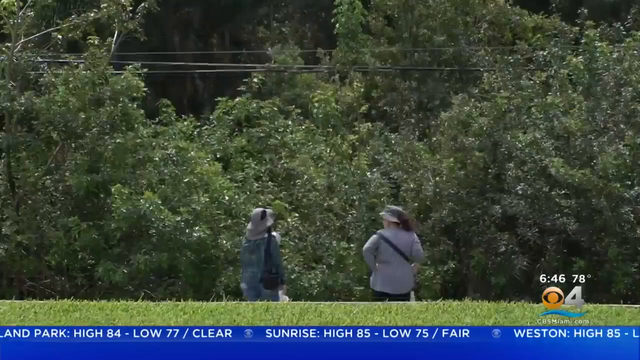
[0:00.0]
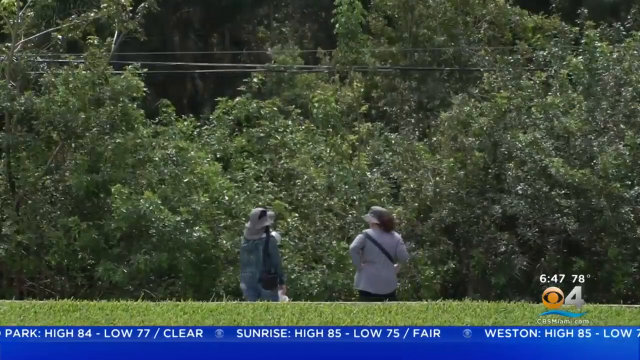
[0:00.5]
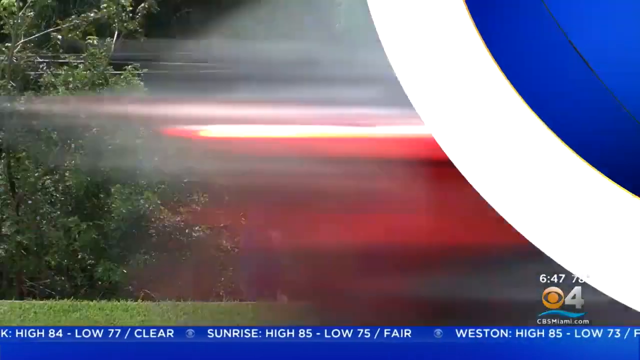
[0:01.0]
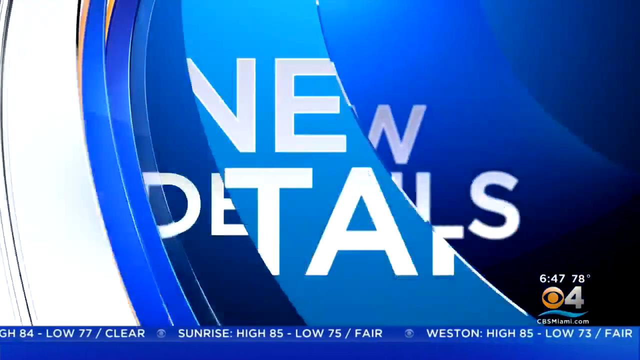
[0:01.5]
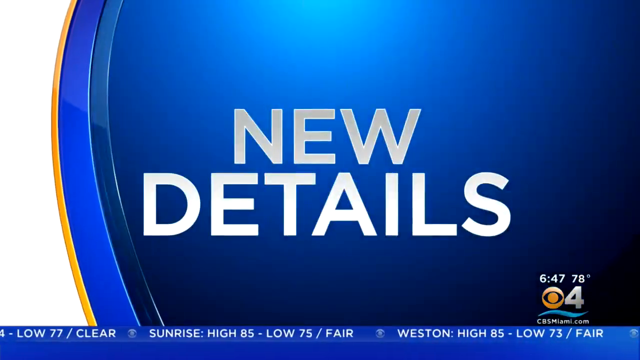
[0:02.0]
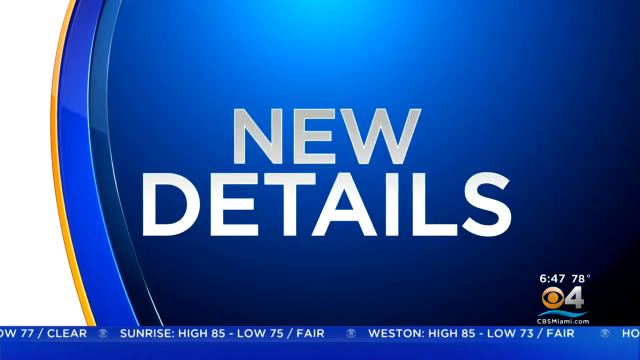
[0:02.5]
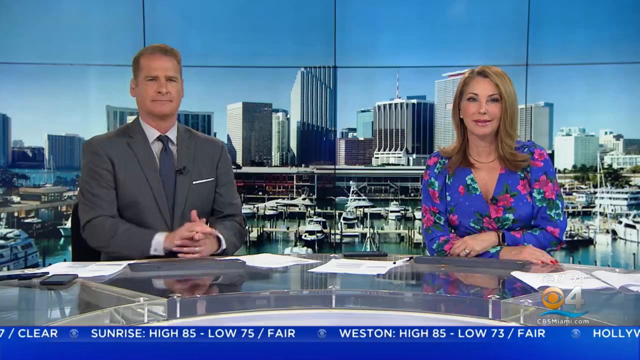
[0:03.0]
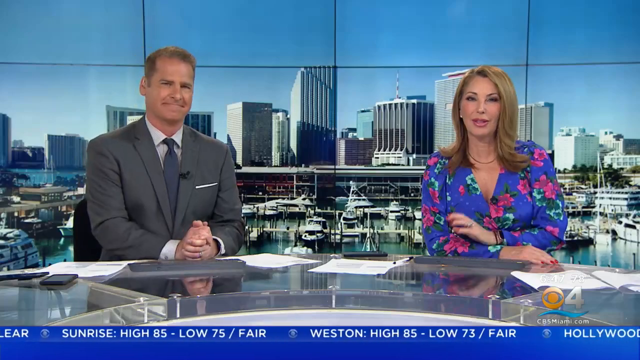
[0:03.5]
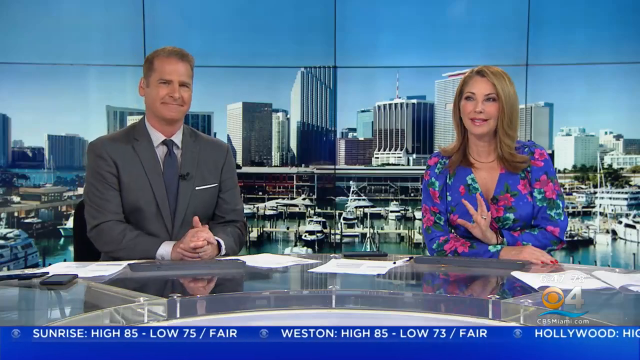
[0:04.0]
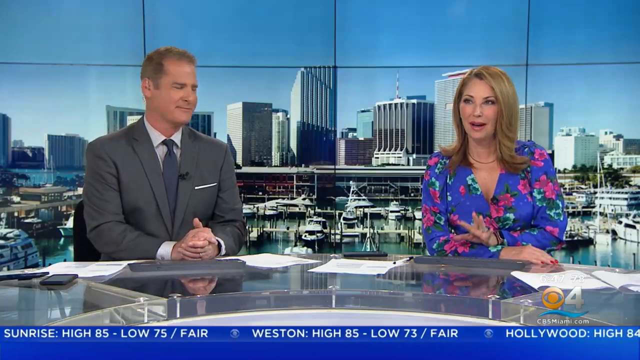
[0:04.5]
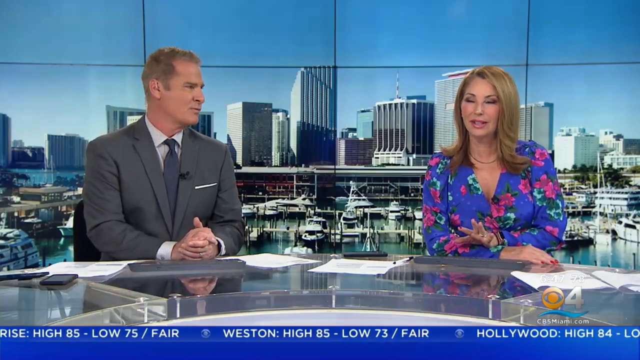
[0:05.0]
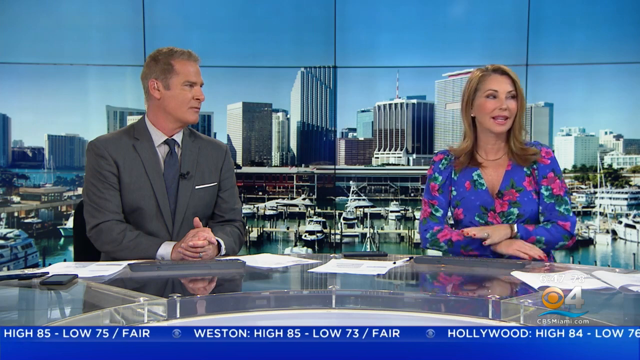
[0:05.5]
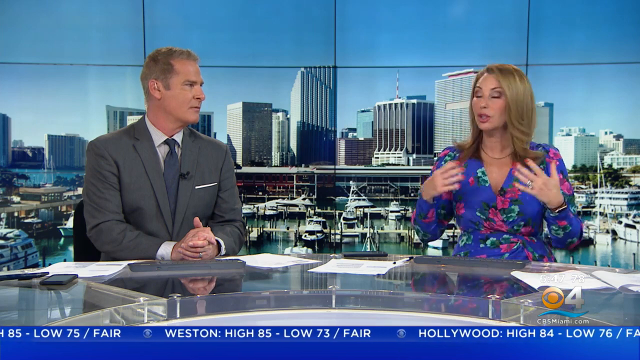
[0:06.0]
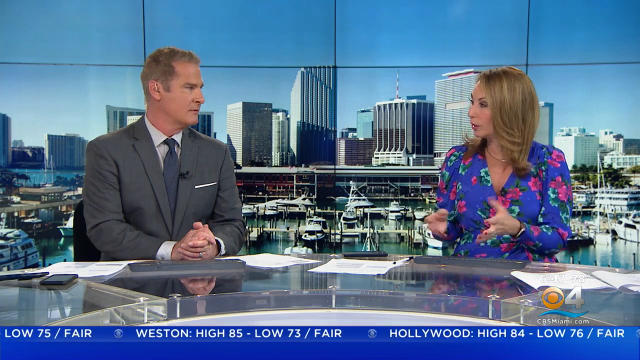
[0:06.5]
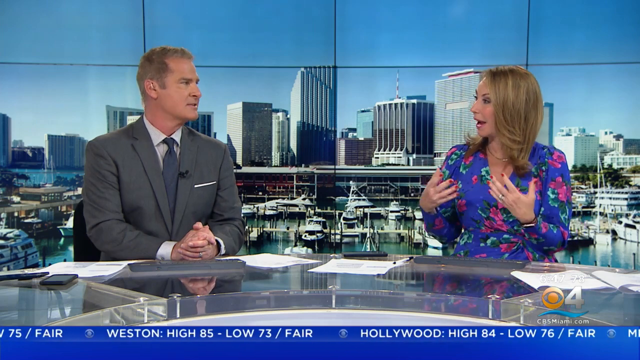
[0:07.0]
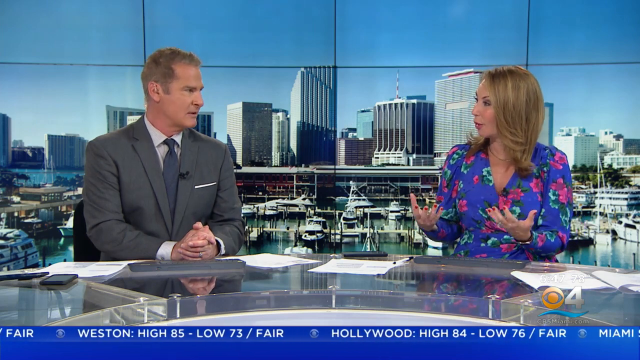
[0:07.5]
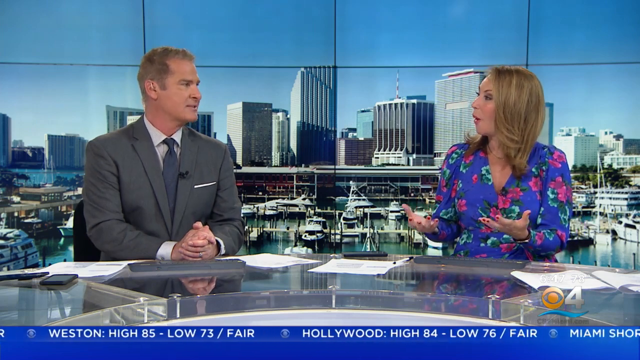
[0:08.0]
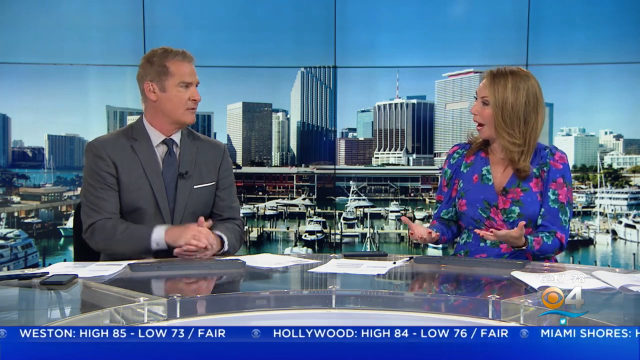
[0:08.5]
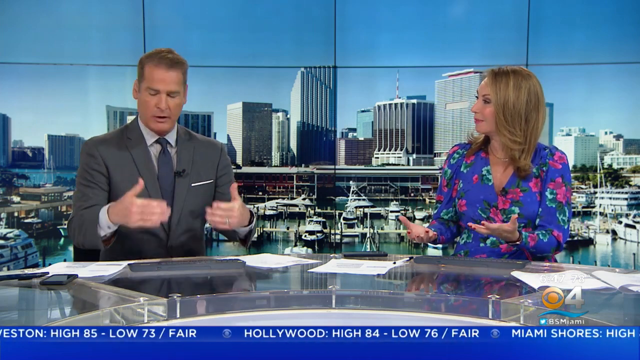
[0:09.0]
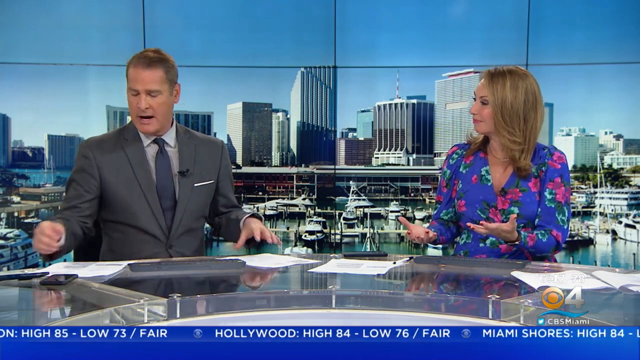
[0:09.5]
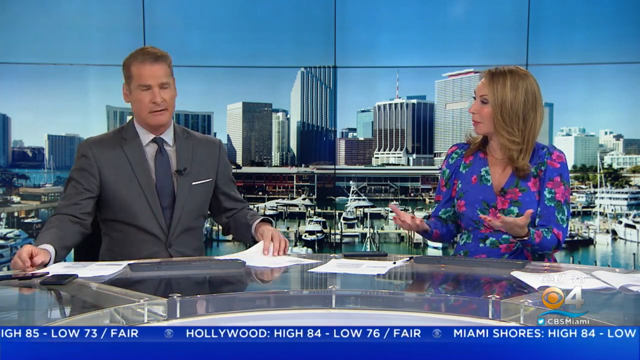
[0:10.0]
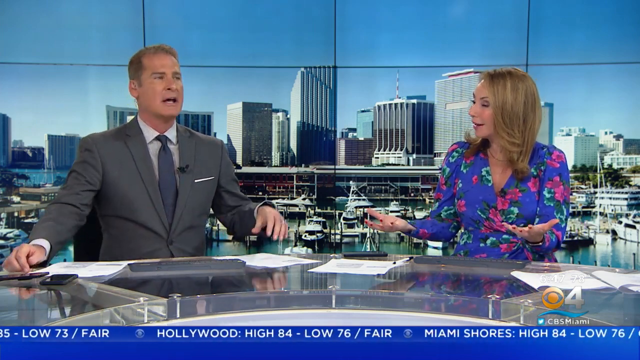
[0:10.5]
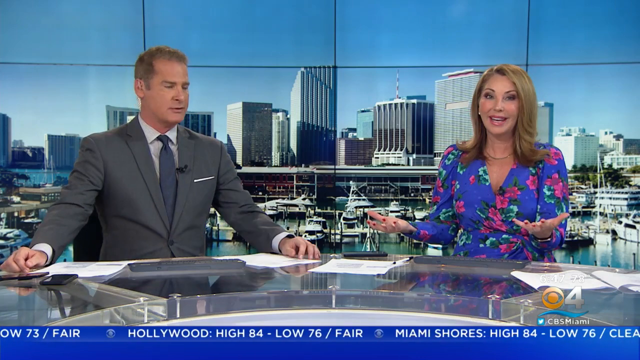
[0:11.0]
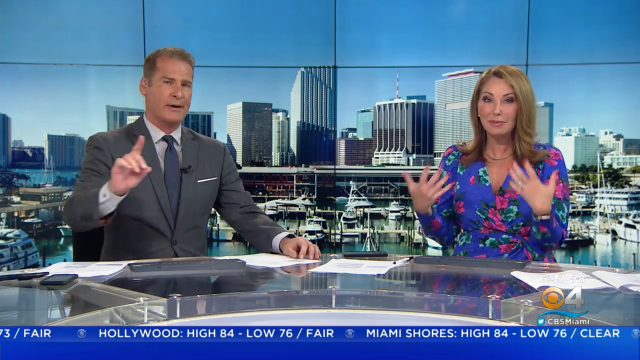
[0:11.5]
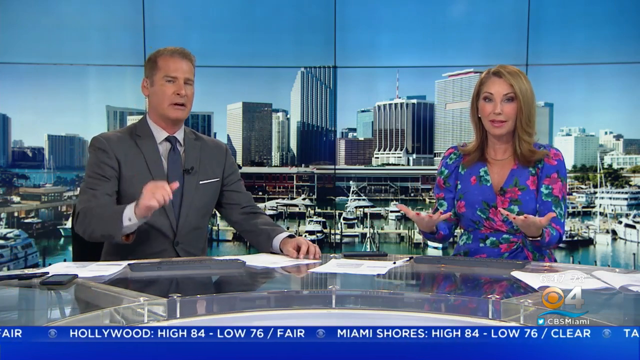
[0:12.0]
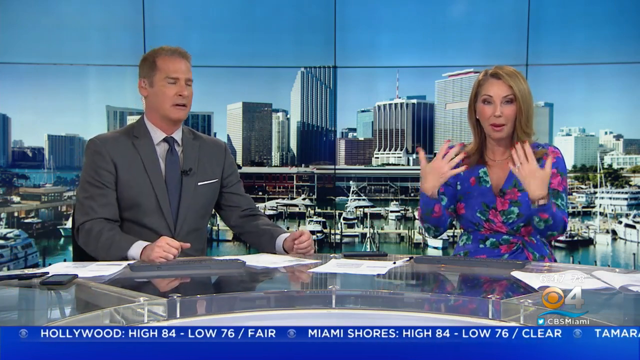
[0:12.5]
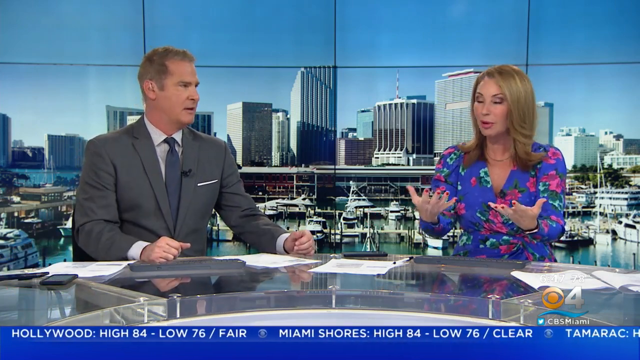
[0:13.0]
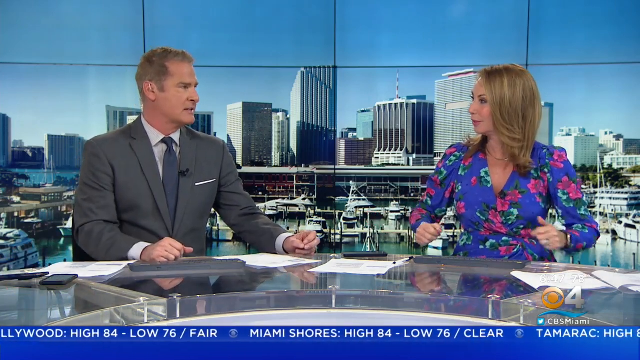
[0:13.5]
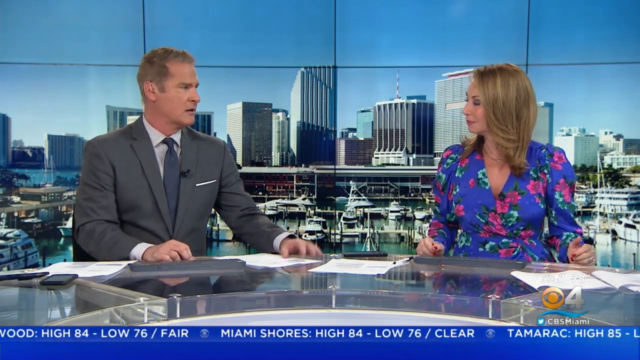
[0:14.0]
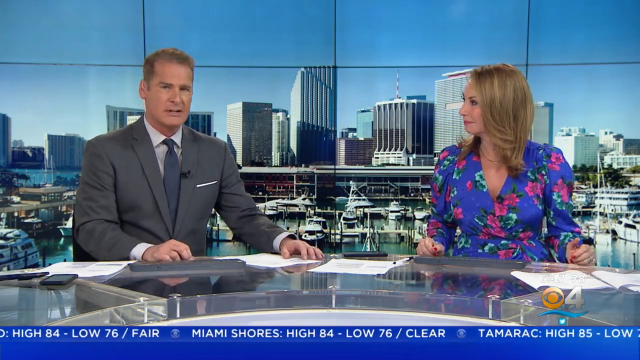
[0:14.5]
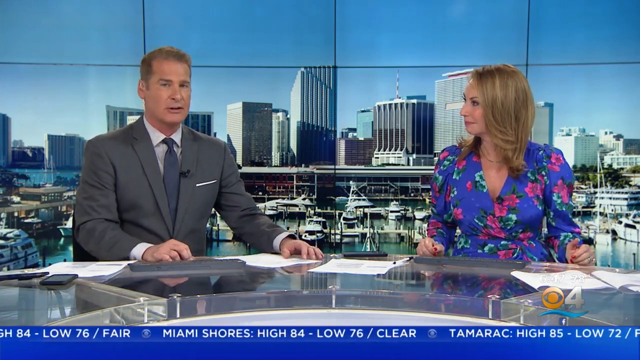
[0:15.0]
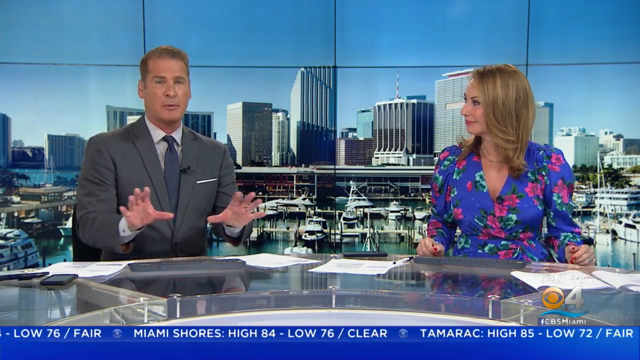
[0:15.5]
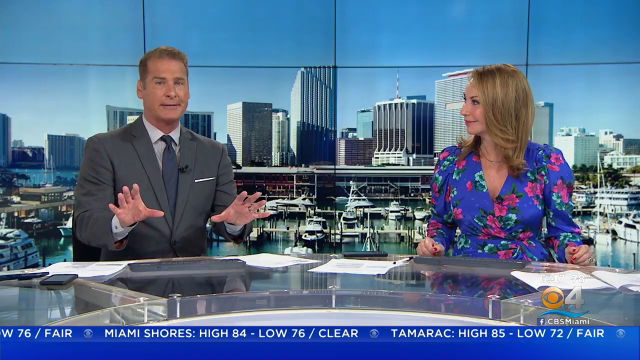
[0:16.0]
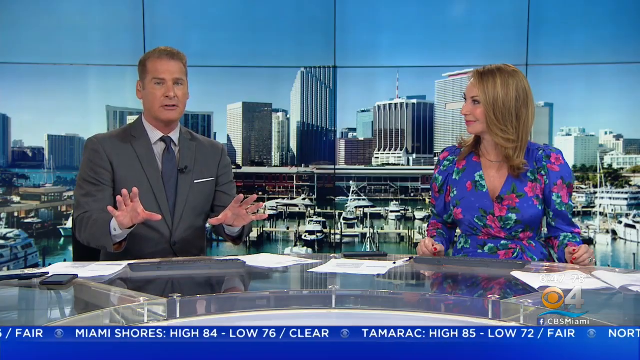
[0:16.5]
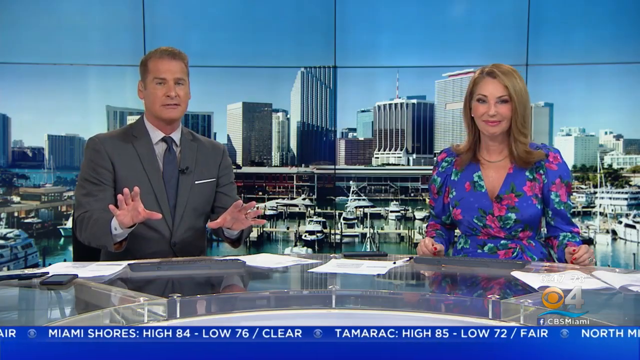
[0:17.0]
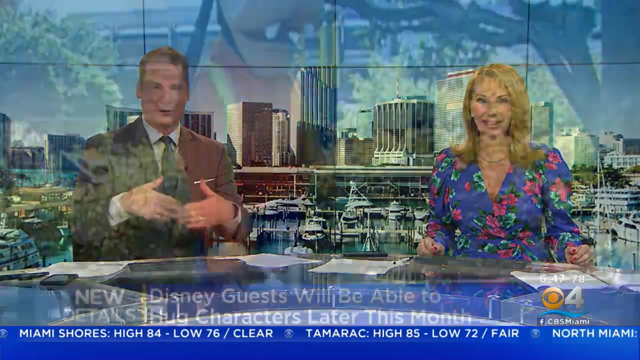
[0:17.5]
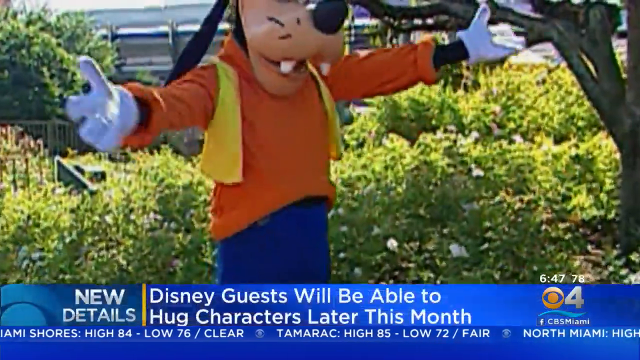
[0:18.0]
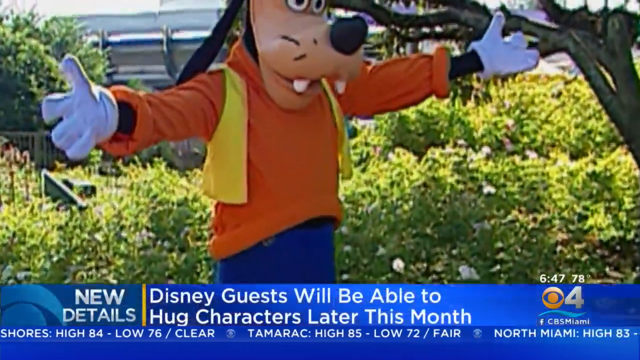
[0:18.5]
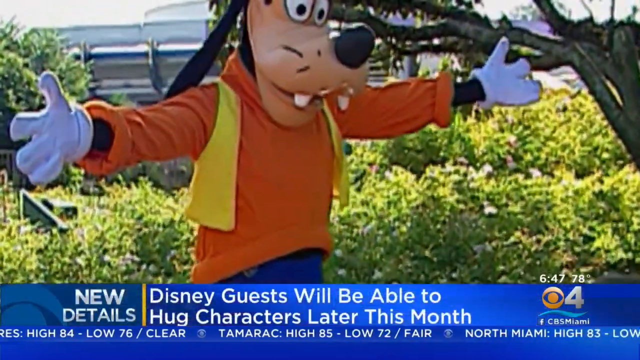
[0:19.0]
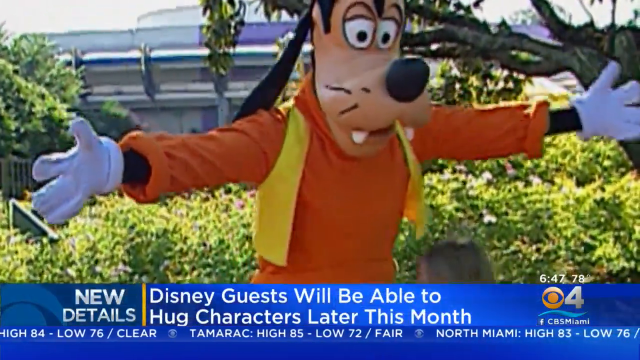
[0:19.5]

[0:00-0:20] The video appears to be a Channel 4 News broadcast in Miami. First a screen comes up that says "New details," then it switches to a woman and a man next to her, apparently the anchors, CBS News for Miami. The two are gesturing animatedly, especially the woman. Next, Goofy, the Disney character, with his arms wide open, picks up a little kid. The video then goes to two women standing with their backs to the camera, facing a wooded area with what looks like power lines going up above their heads through the trees. One of them is looking at the other. They appear to have floppy hats on for hiking in nature. The woman on the left has a backpack over her right shoulder, and the other woman has a strap across her back that probably holds some type of utility carrying pack. Both wear long-sleeve light blue shirts. A crawl bar along the bottom gives the weather and sunrise.